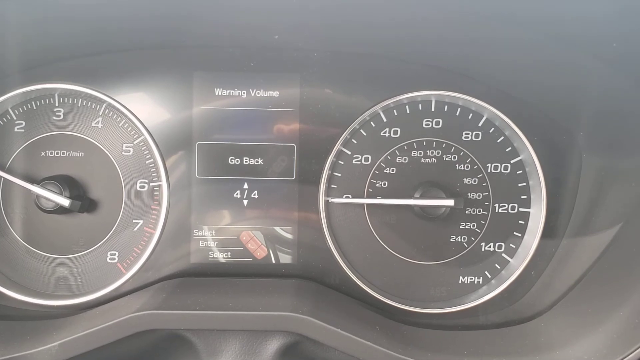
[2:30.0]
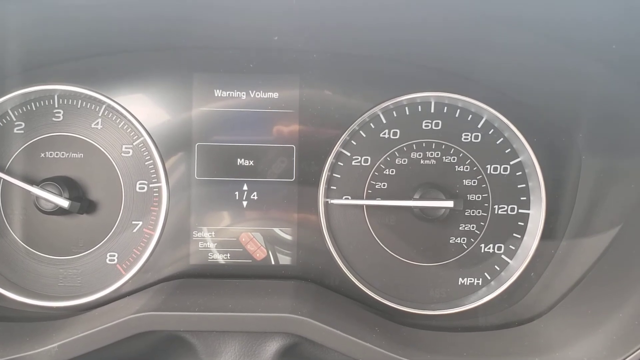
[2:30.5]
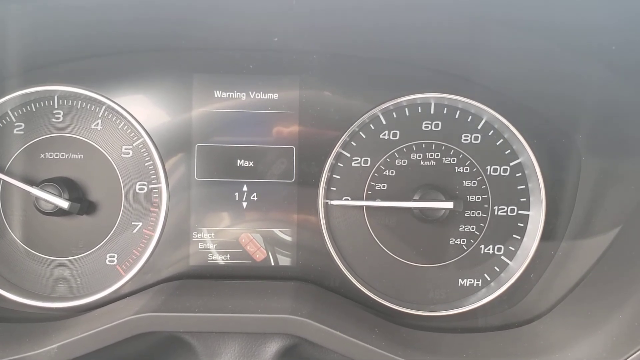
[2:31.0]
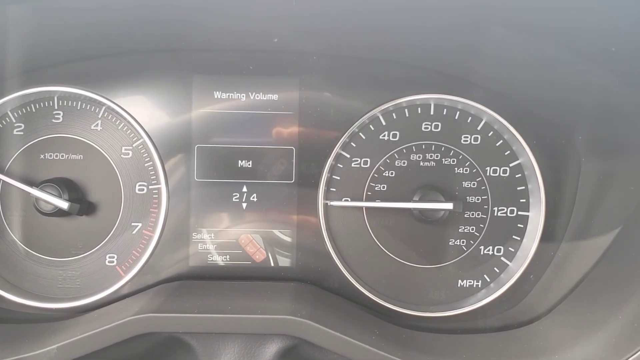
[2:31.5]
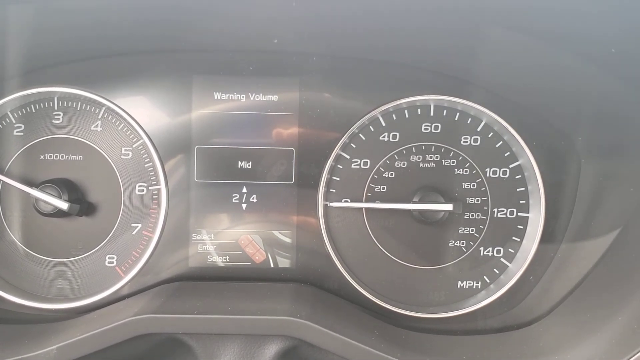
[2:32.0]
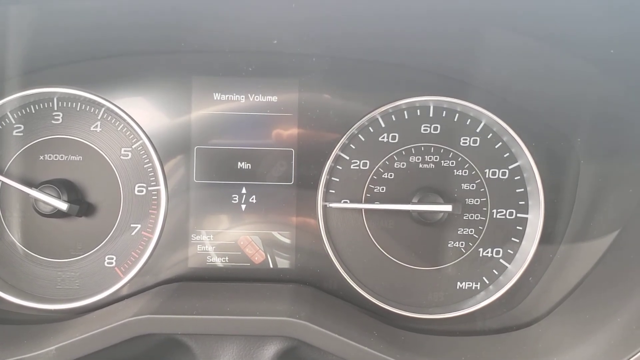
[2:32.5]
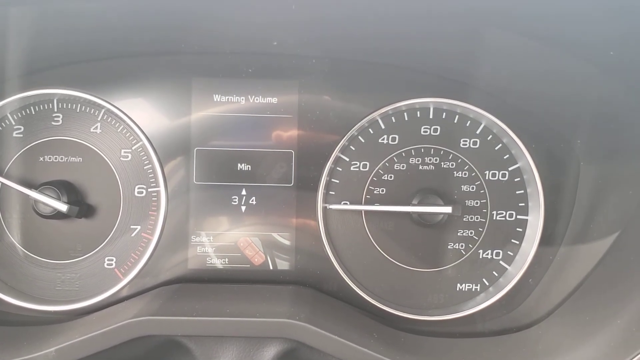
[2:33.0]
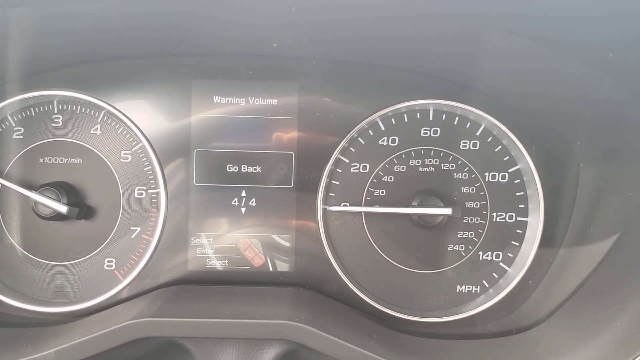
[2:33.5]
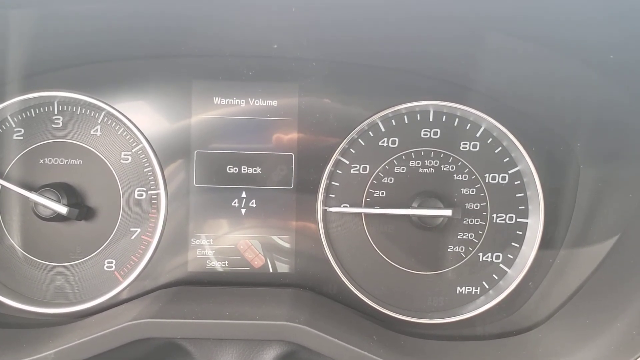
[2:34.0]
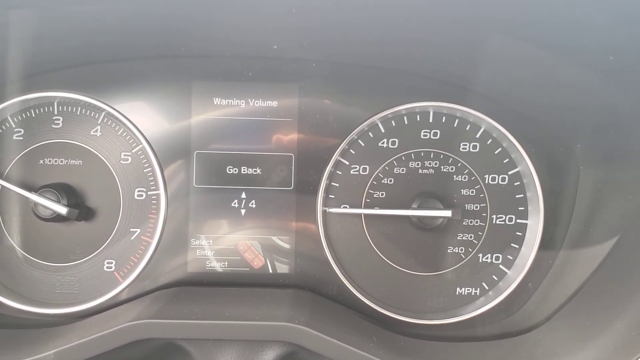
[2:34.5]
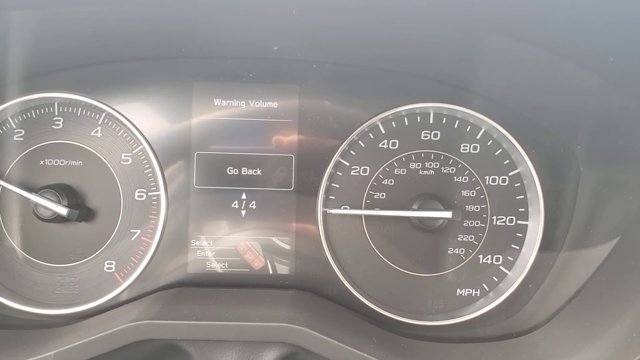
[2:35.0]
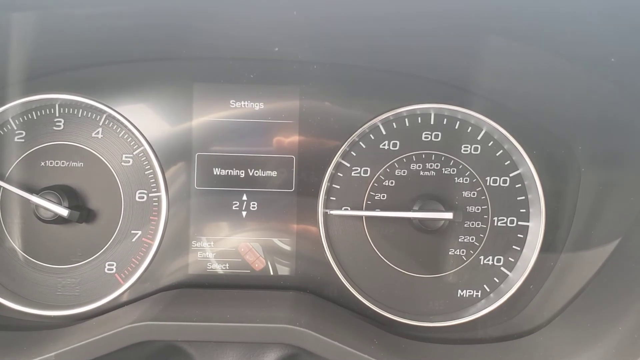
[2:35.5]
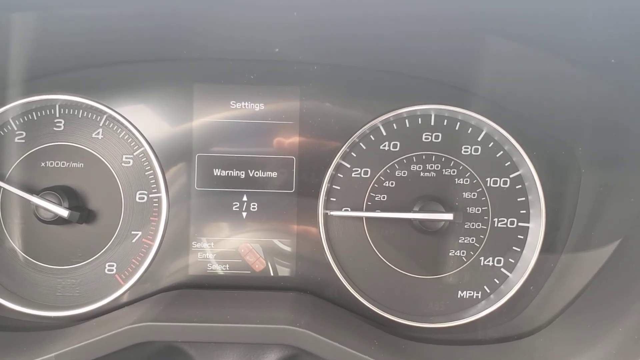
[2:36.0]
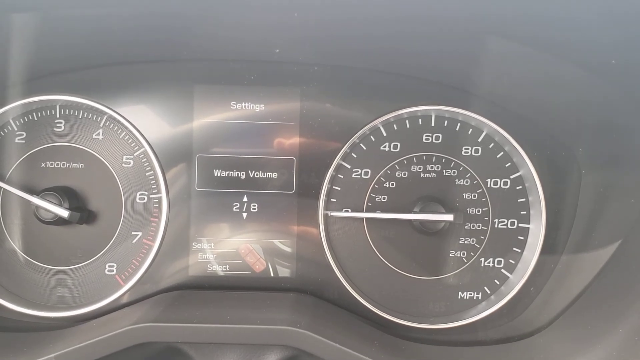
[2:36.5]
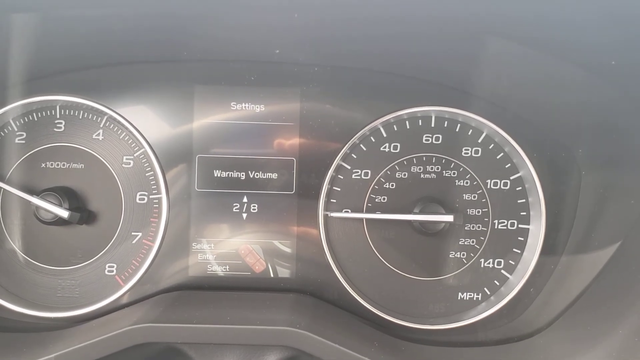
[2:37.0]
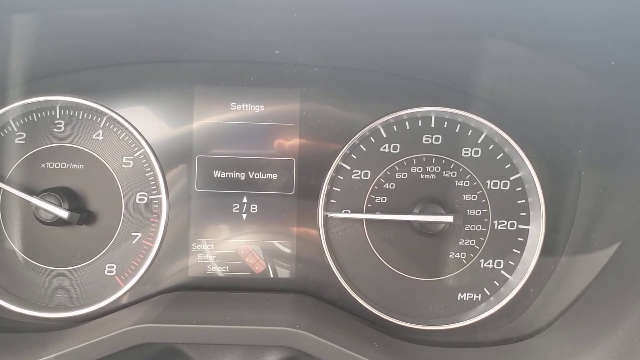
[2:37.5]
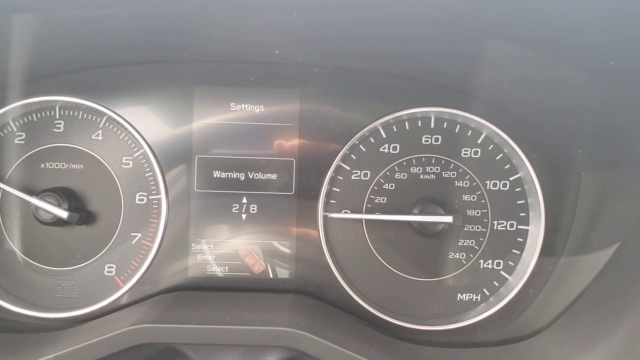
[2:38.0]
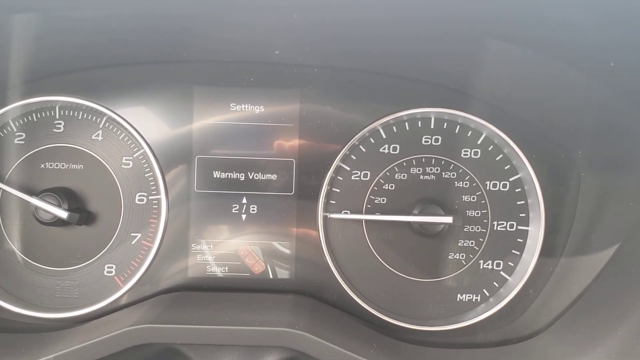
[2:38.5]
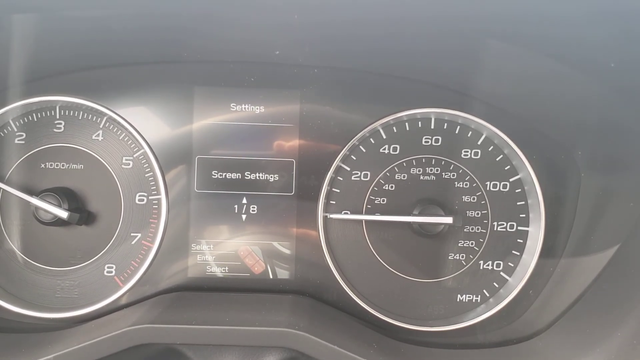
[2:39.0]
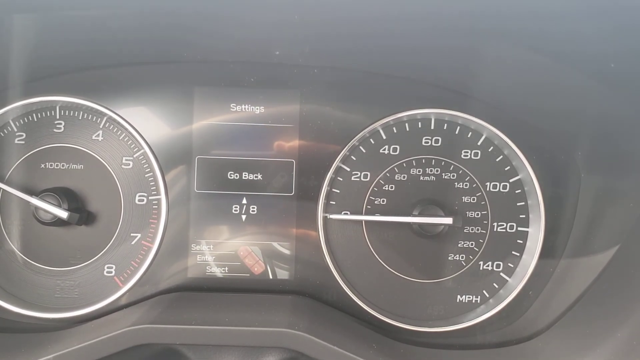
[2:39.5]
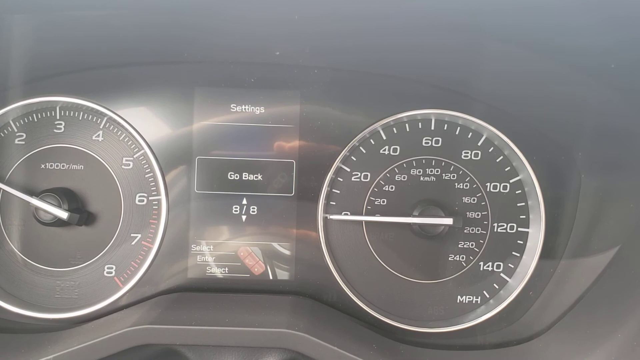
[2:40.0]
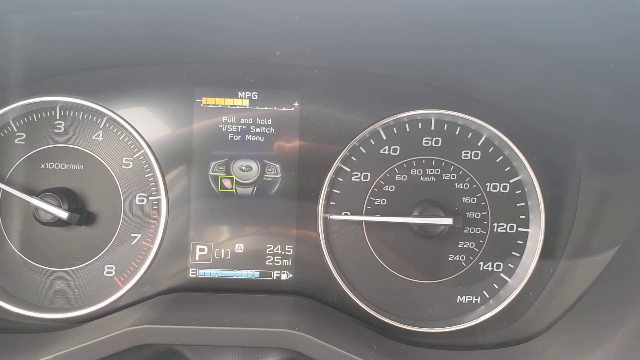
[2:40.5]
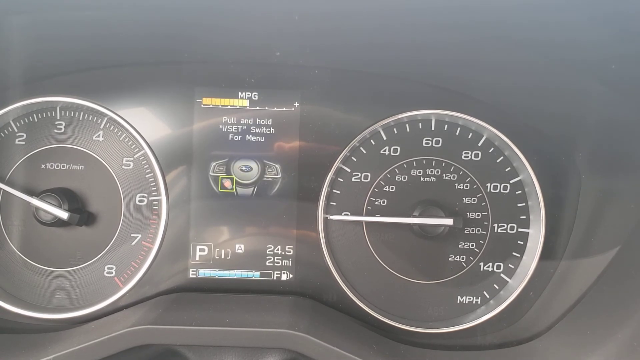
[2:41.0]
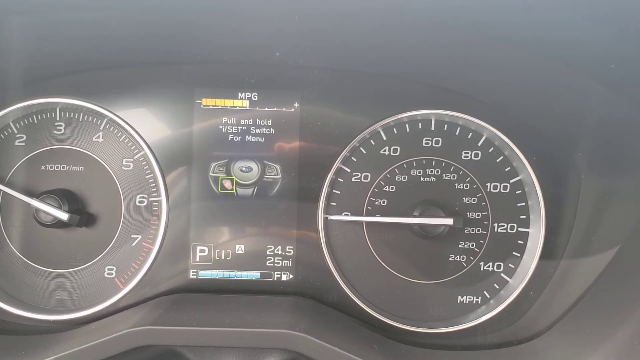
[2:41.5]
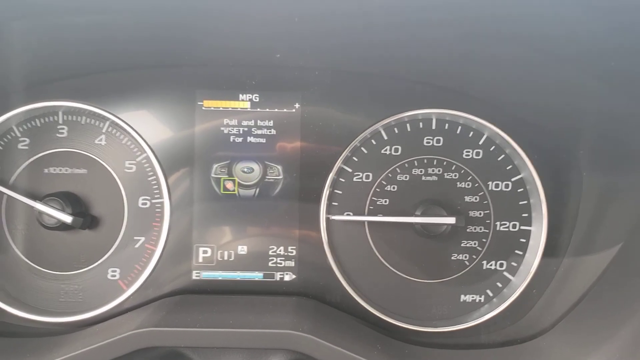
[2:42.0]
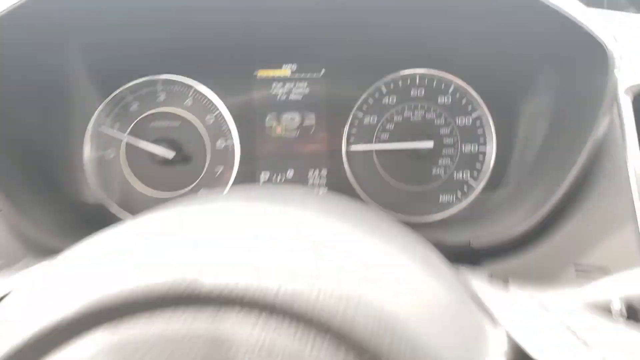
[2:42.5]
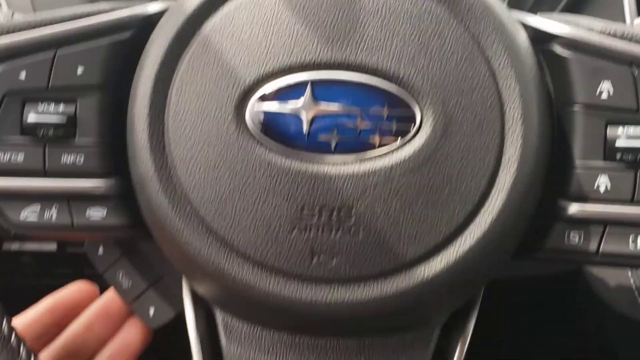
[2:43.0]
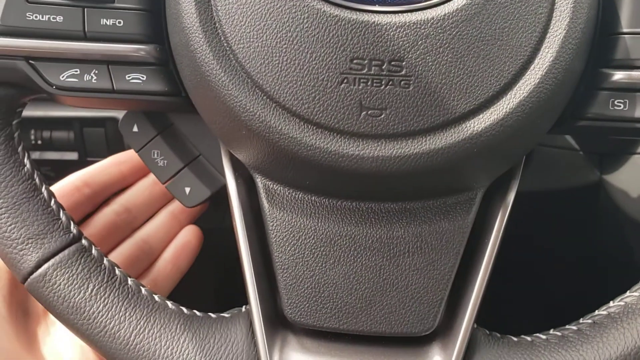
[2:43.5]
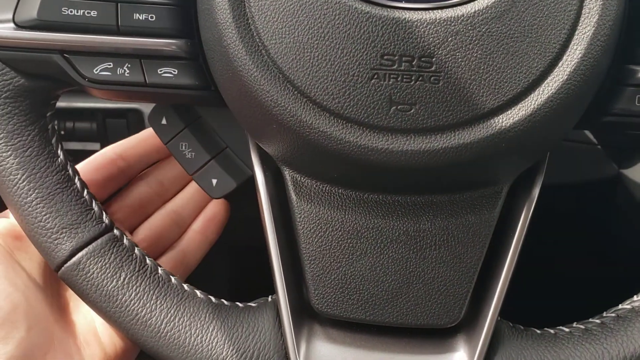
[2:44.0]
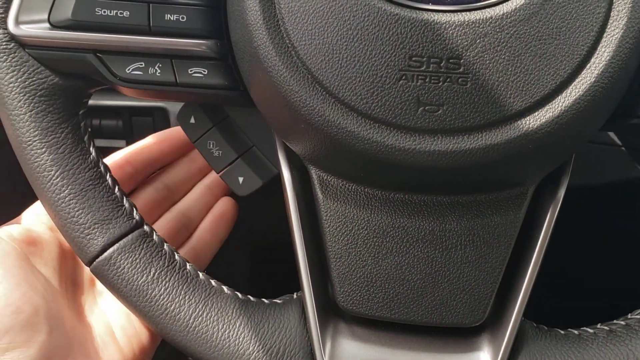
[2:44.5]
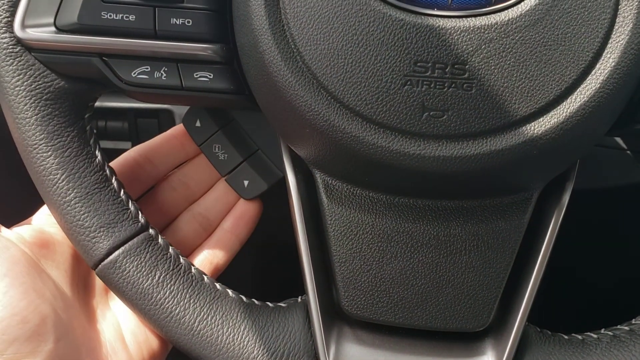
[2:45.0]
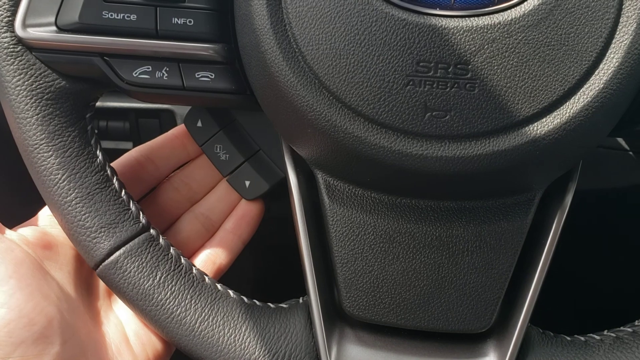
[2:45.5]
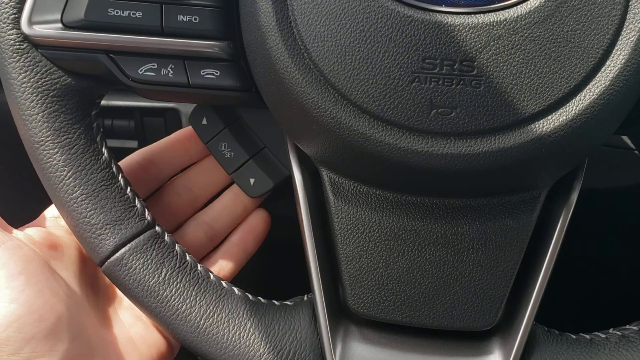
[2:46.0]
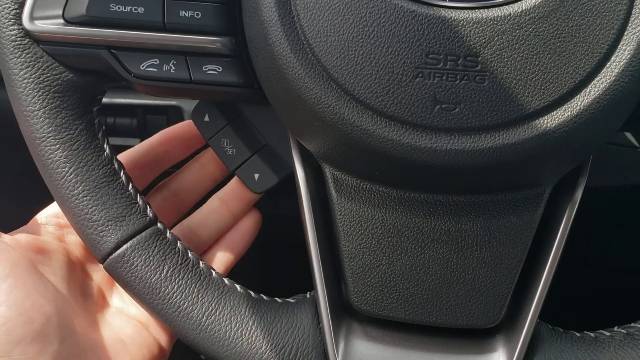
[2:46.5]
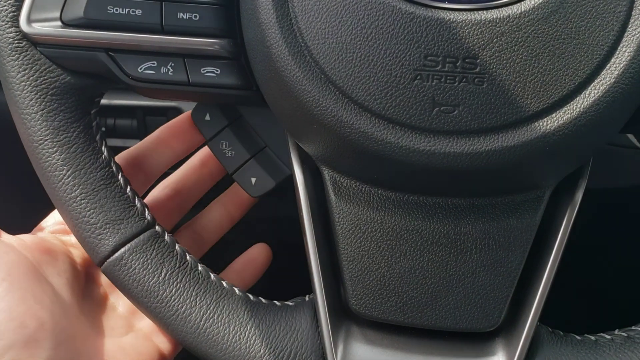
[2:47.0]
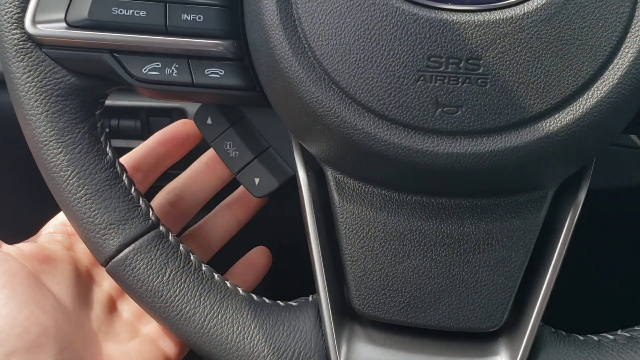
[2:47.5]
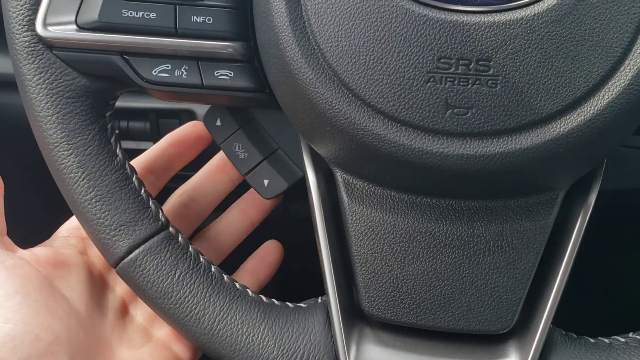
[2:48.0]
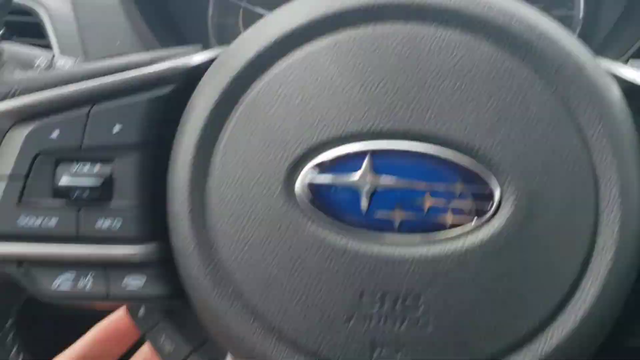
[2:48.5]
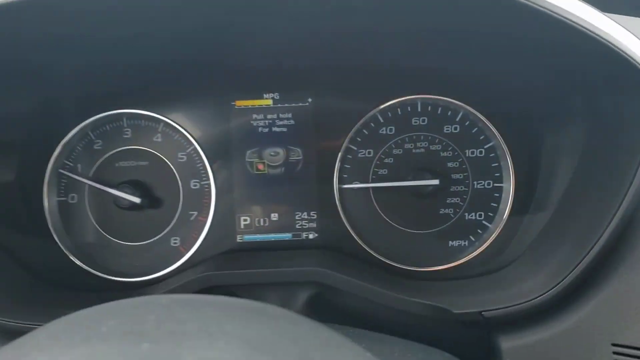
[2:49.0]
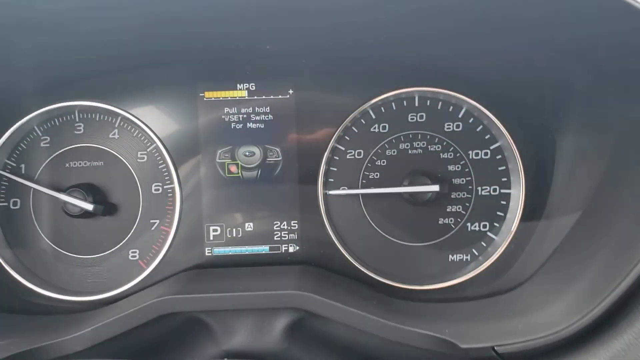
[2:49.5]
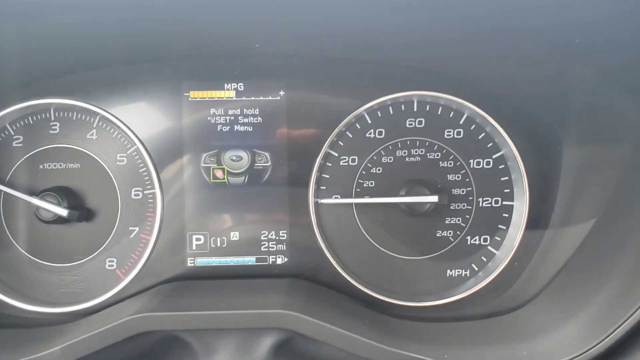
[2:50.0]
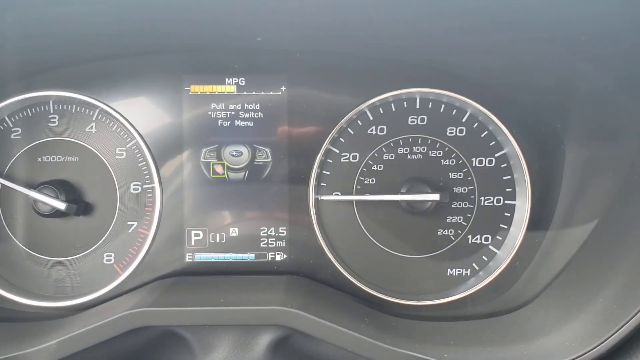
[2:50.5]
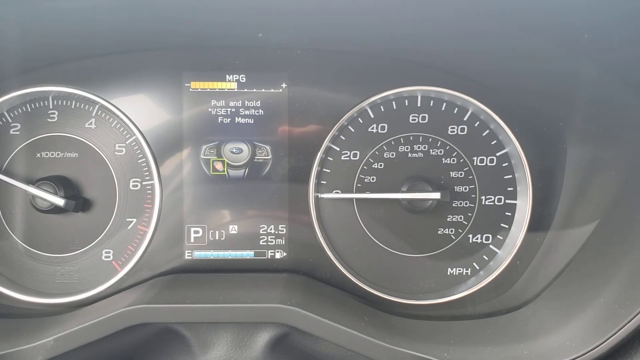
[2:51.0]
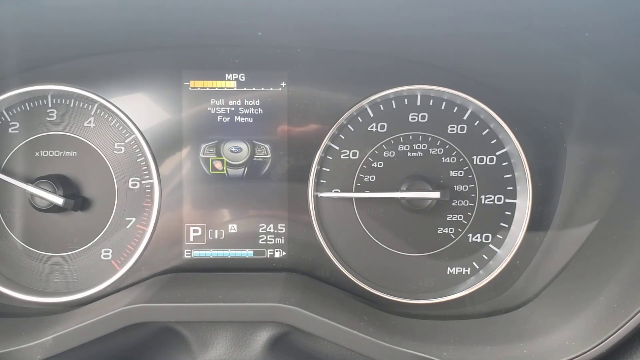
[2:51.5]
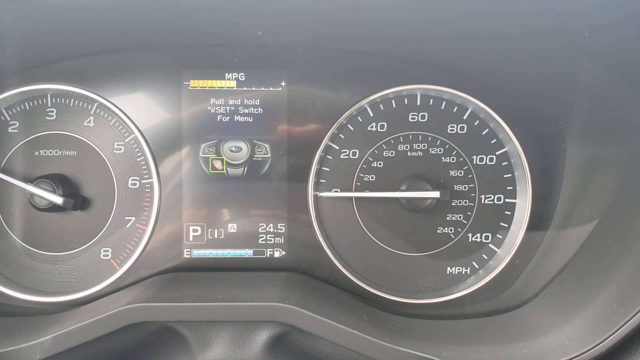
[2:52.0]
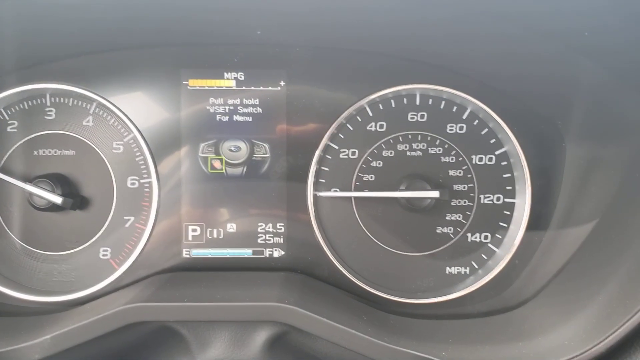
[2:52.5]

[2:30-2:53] The digital screen between the two meters on the driver's dashboard says "warning volume", with a white line across it, "go back", an up and down arrow, and "4-4". It then says "zero", then "max", "mid", "min", "go back", followed by "warning volume", "screen settings", "go back". Then it says "mpg", "go back", and "and hold", maybe "reset" or "W set", "switch for menu", along with "24.5" and "25 mi", and the E to F gauge, which is three-fourths full. The camera then goes down to the Subaru logo, showing the SRS airbag in black and a trumpet symbol marking the horn. The person has the four fingers of their left hand, not including the thumb, touching three buttons, apparently to show what happens when the buttons are used and how to use them.